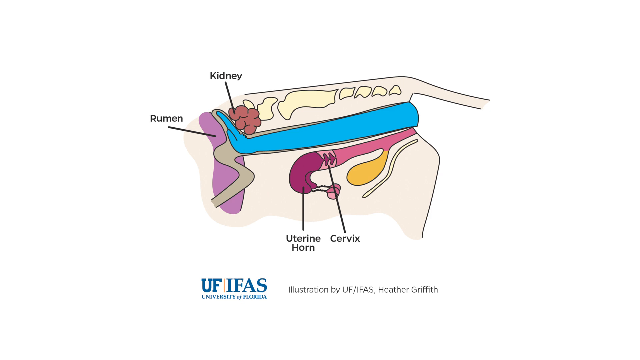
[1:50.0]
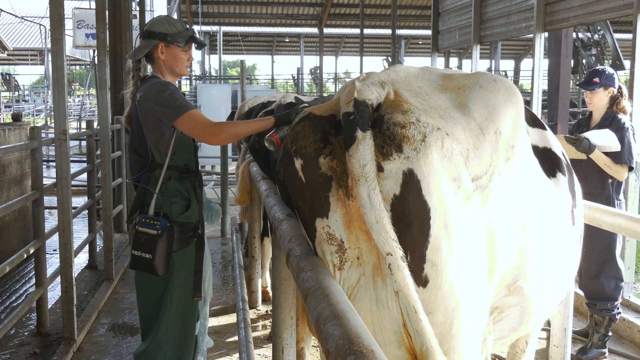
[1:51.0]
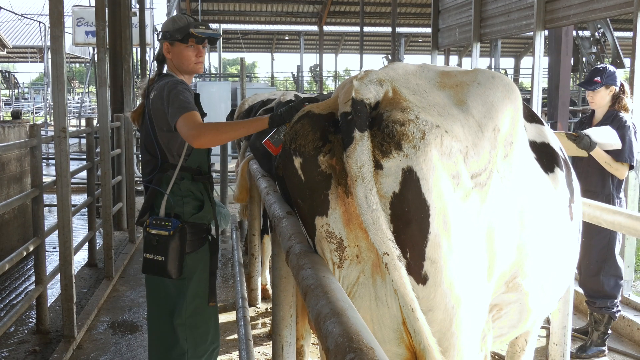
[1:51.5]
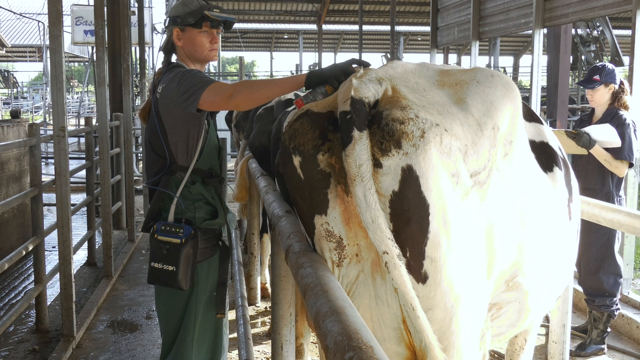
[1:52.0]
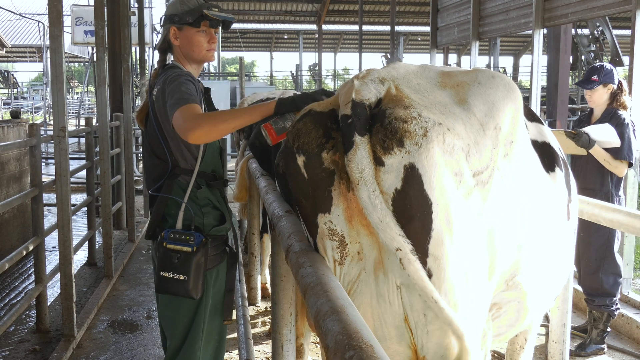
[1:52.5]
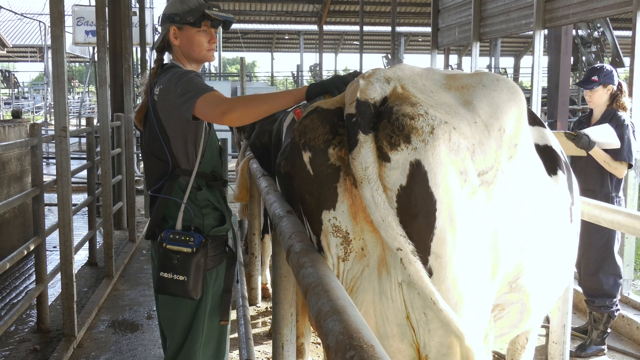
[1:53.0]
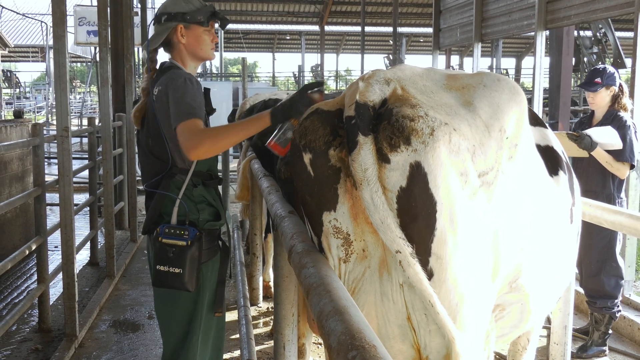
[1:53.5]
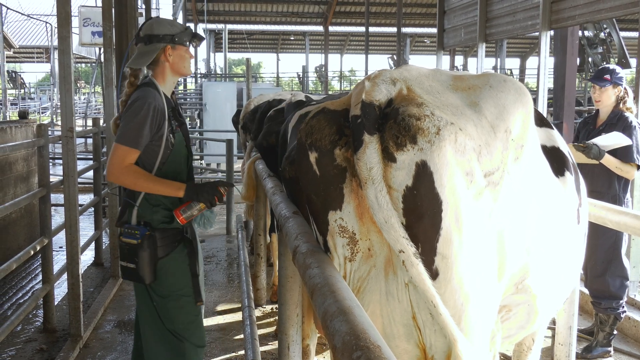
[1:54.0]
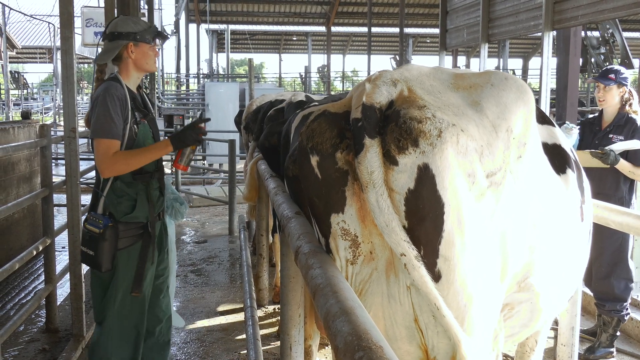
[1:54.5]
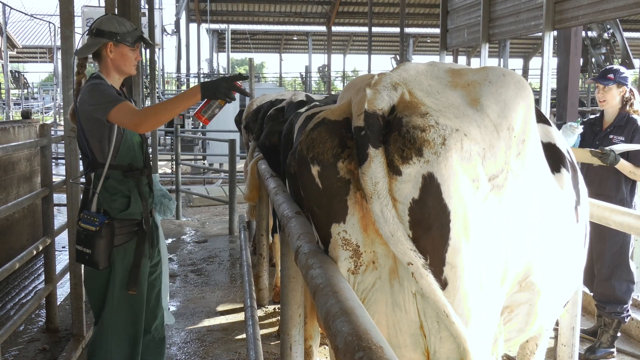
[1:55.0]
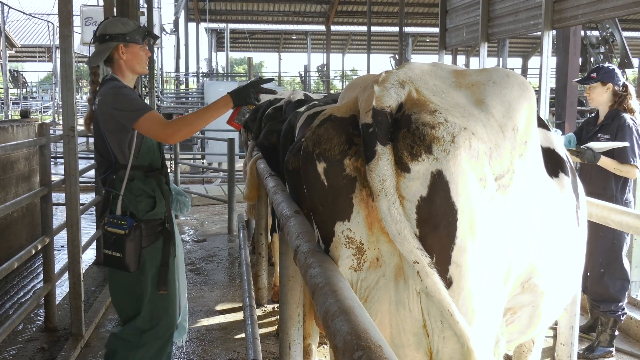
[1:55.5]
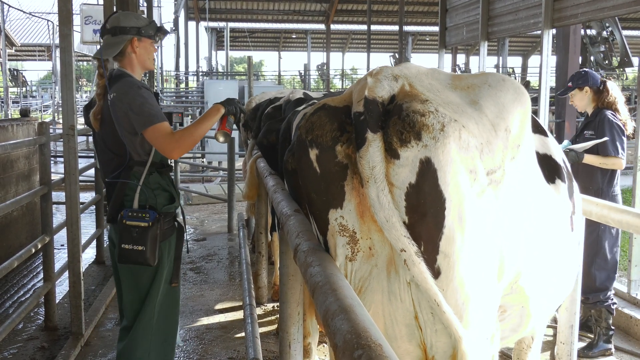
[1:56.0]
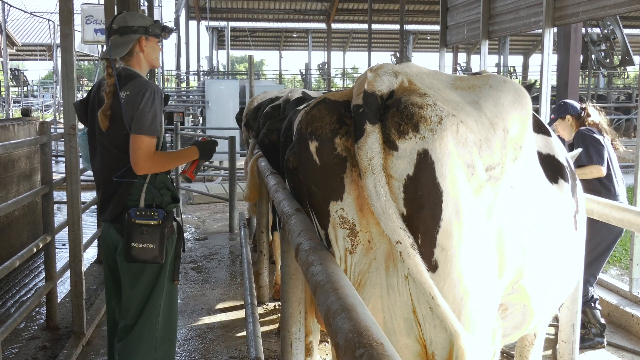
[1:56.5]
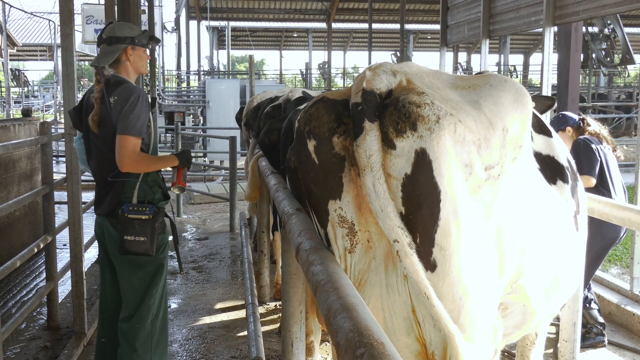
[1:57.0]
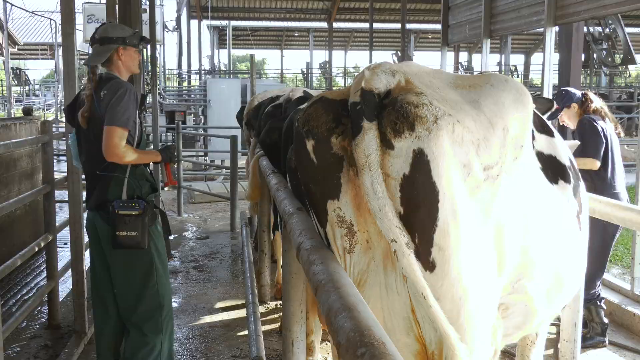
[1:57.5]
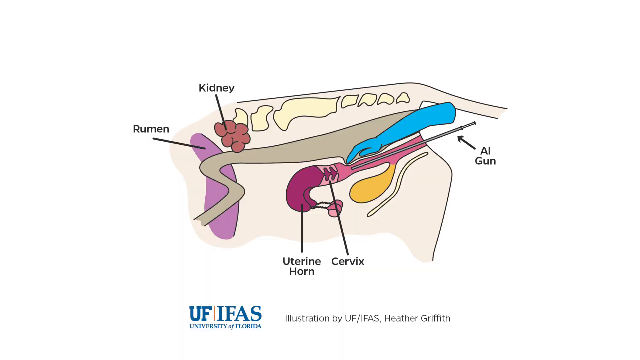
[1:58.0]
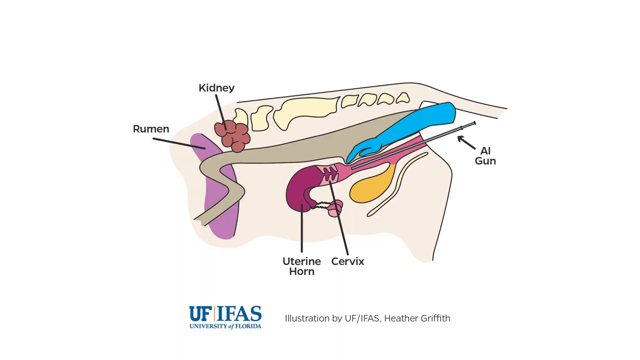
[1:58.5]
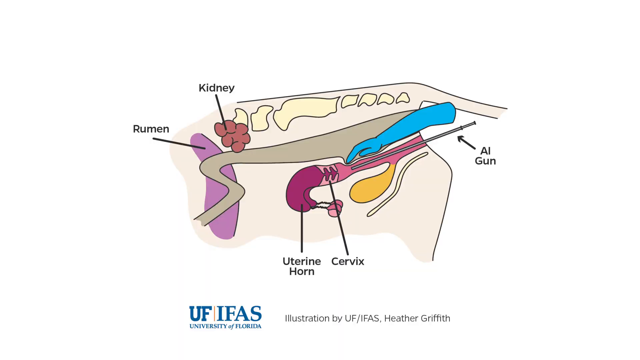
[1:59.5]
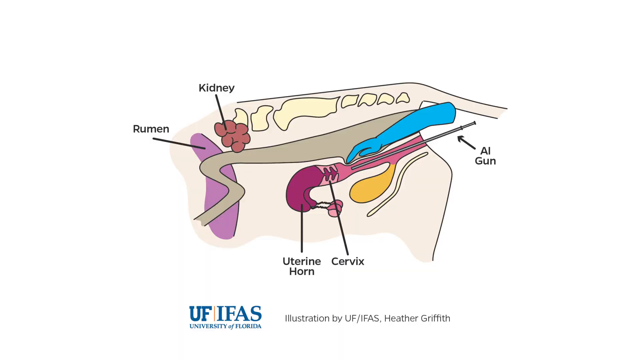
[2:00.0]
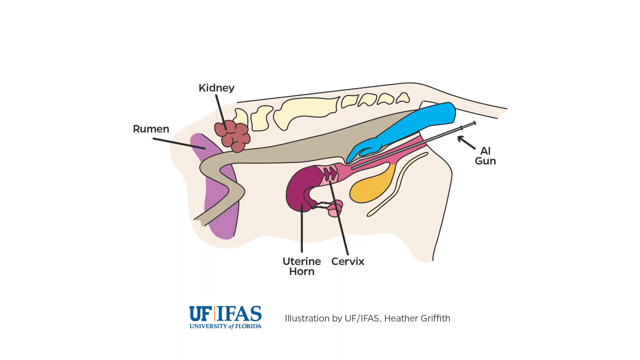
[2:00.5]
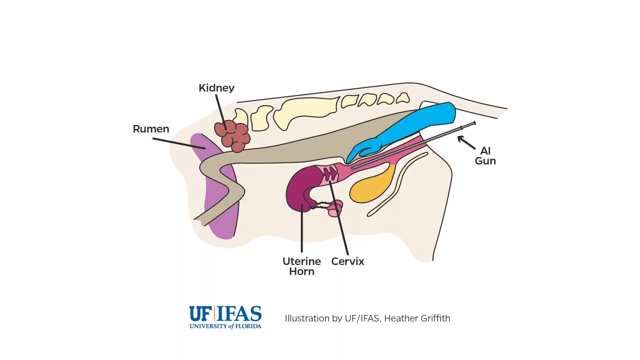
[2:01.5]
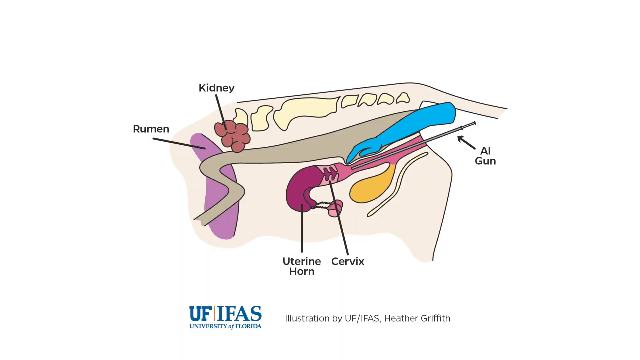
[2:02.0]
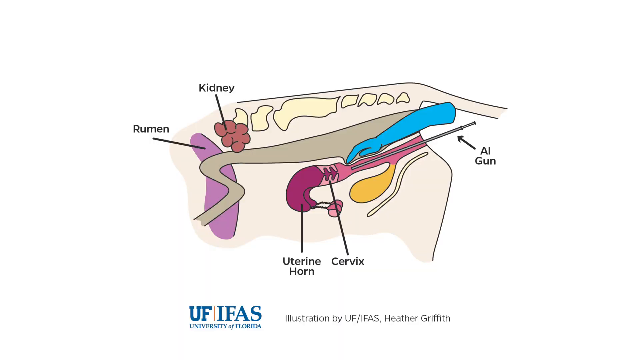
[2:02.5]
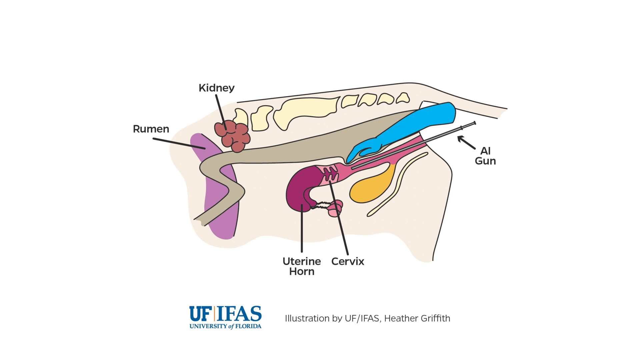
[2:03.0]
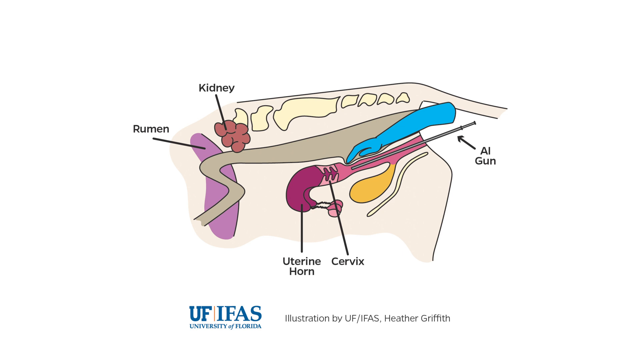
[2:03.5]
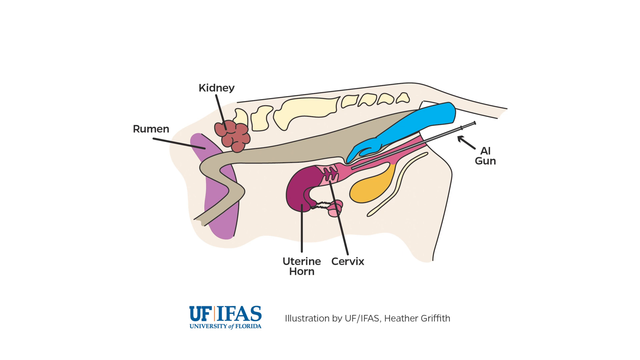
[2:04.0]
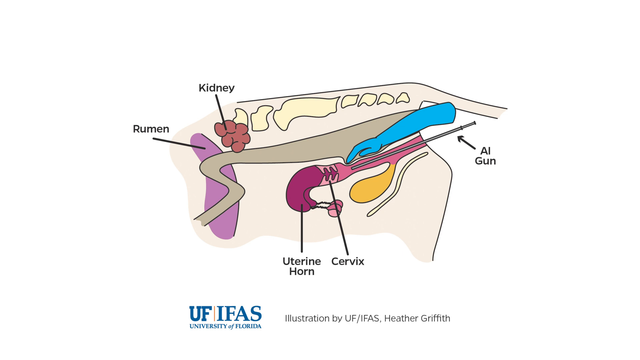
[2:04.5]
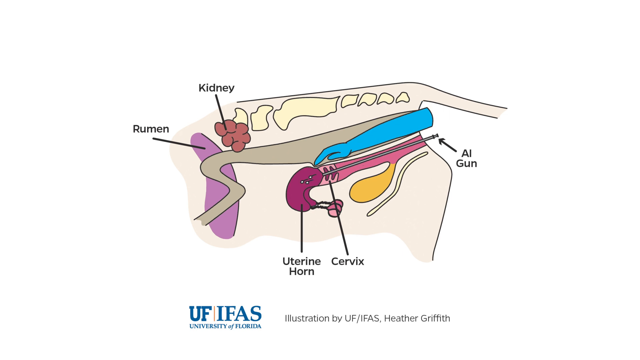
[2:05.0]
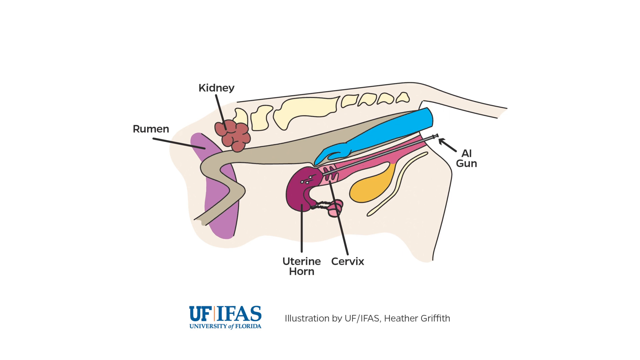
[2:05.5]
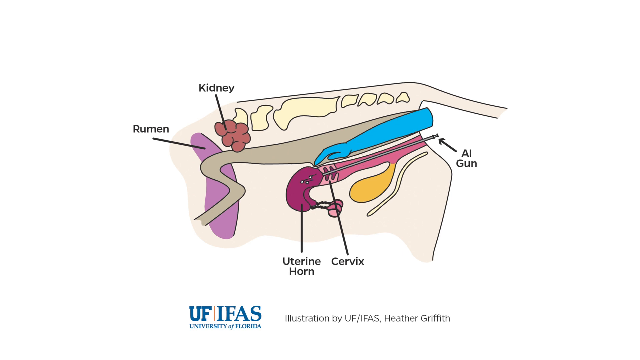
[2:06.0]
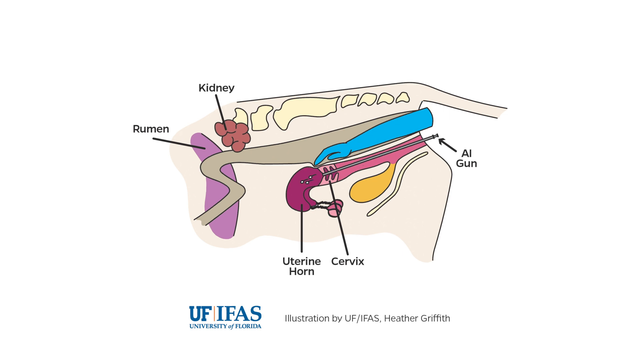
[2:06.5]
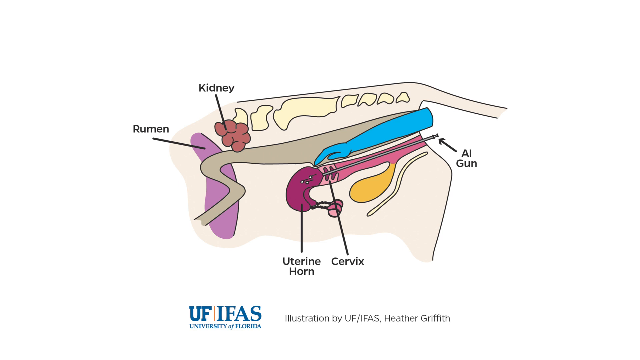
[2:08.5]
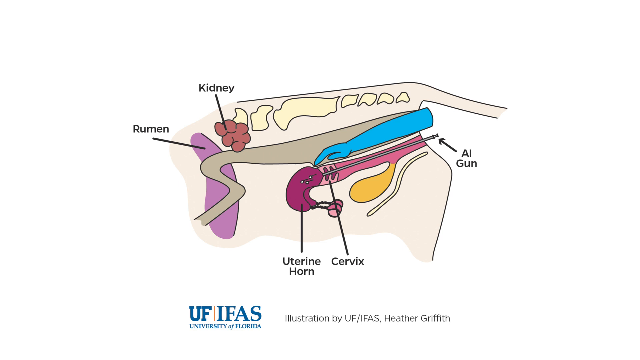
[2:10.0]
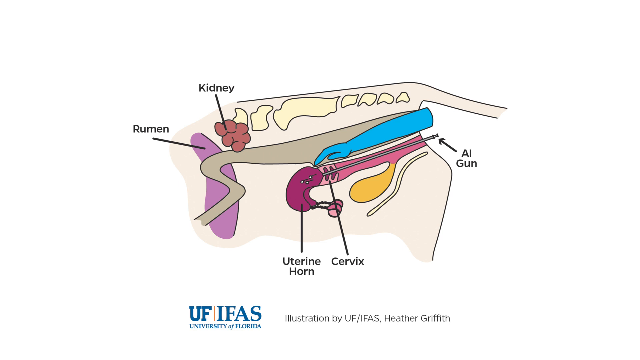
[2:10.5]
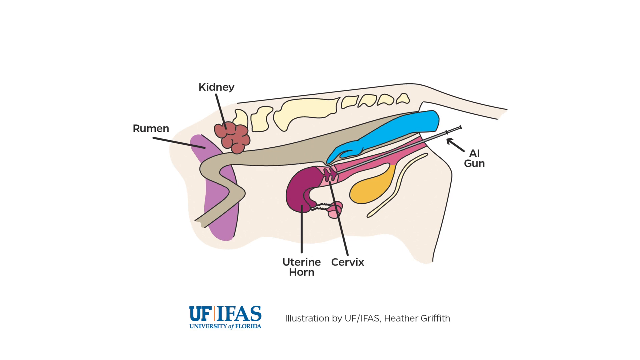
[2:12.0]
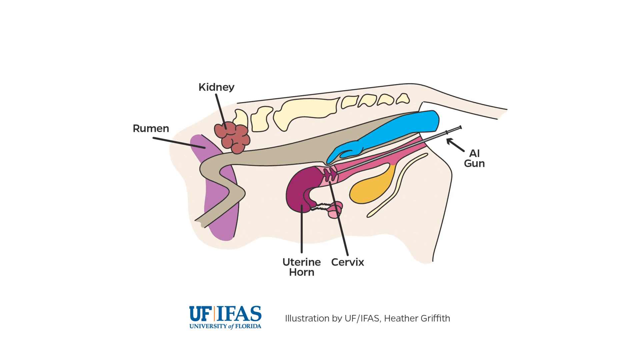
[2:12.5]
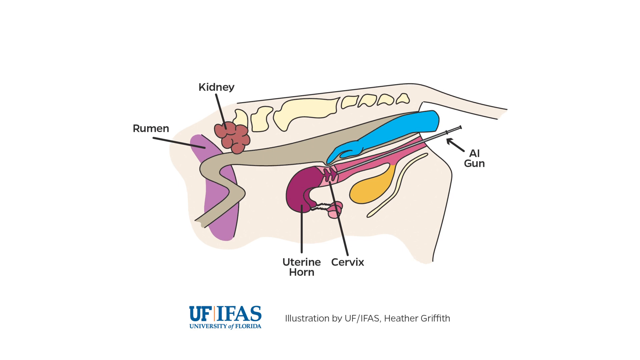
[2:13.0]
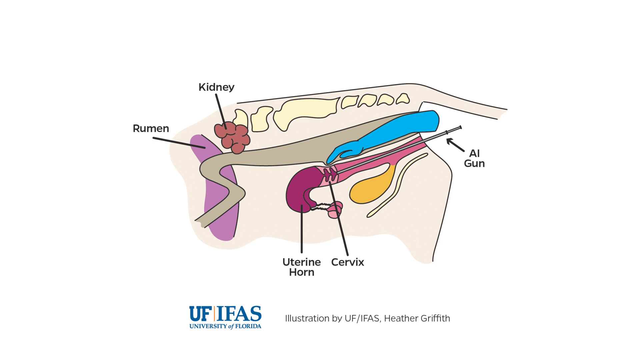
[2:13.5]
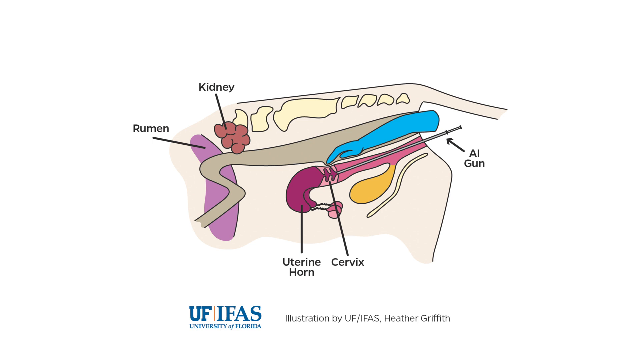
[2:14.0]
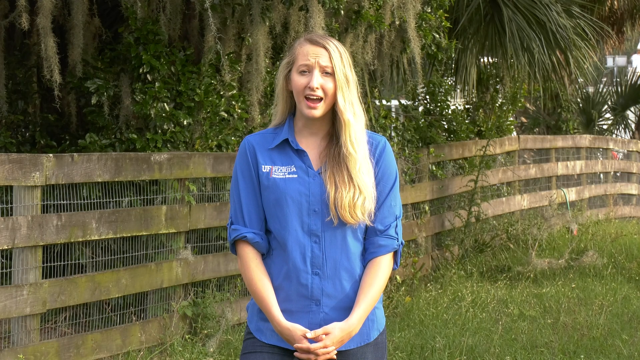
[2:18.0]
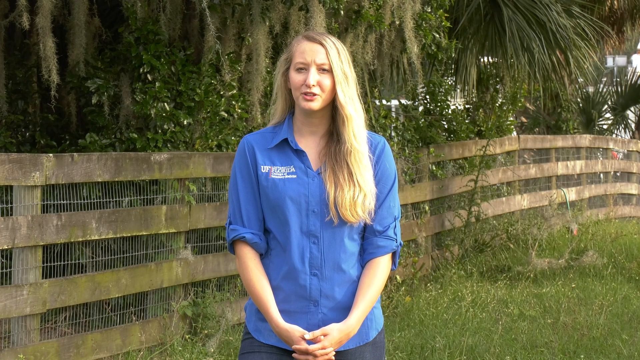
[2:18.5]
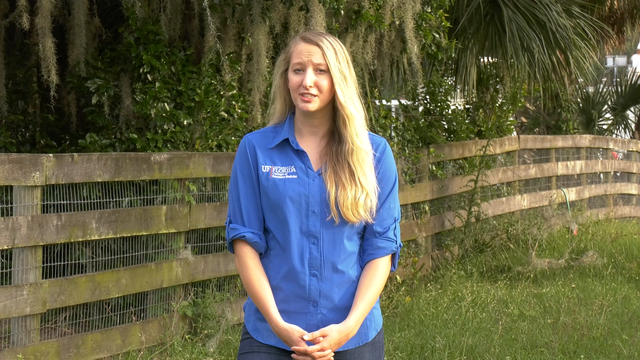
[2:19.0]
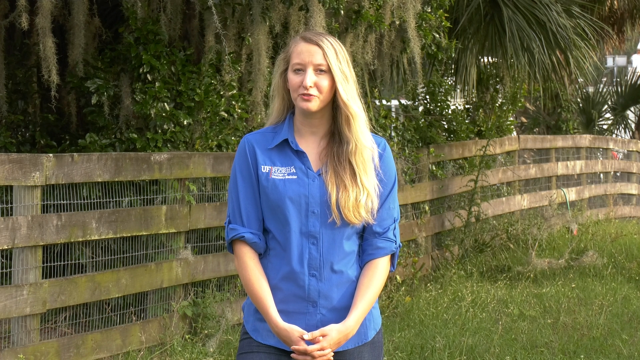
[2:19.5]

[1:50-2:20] The diagram is still on screen, then the video goes to the cows, and Alexandra sprays something on them; the red spray apparently marks the cows as done. The AI gun is shown: a glove with the probe inside it, rather than a real hand, touching the cervix area. The video returns to Alexandra talking, and the probe is pushed all the way to the rumen area where the kidney is. The glove touches the uterine horn and the rumen, and is repeatedly pushed up against them.